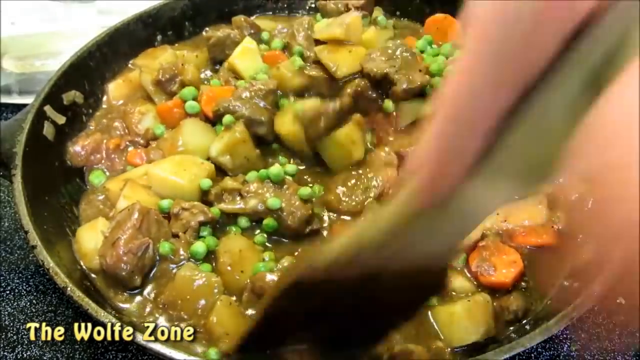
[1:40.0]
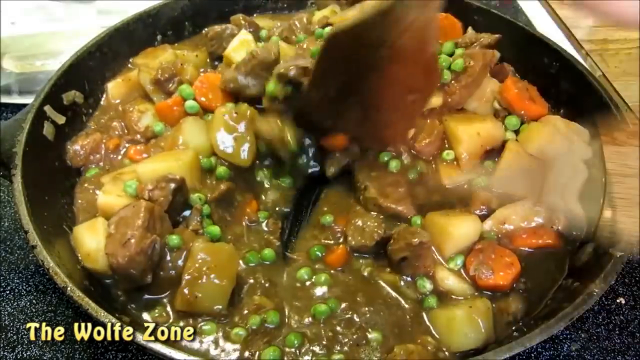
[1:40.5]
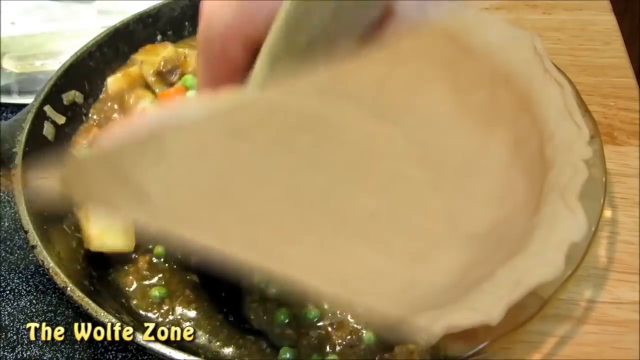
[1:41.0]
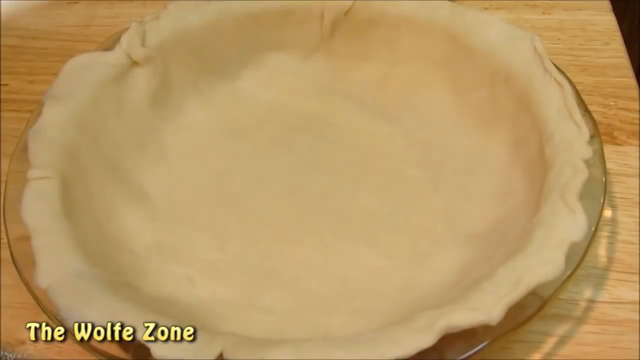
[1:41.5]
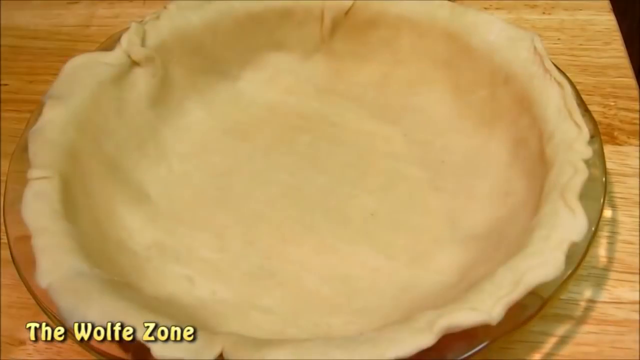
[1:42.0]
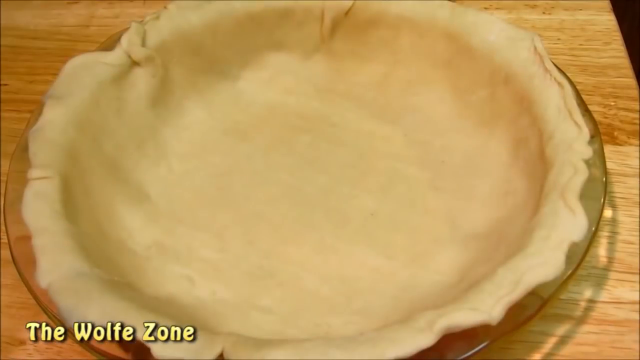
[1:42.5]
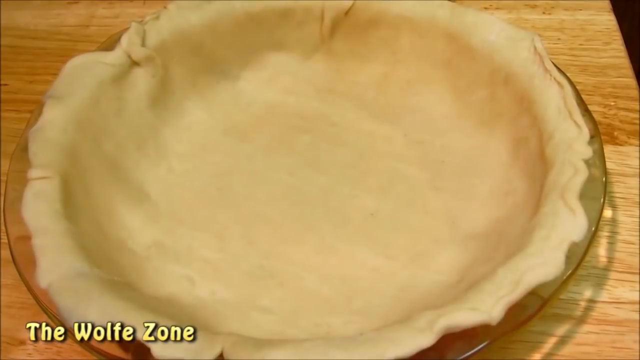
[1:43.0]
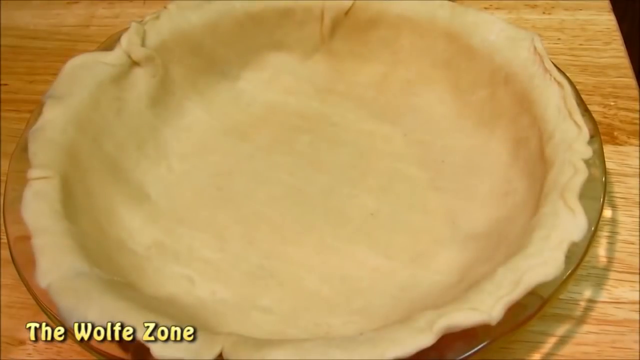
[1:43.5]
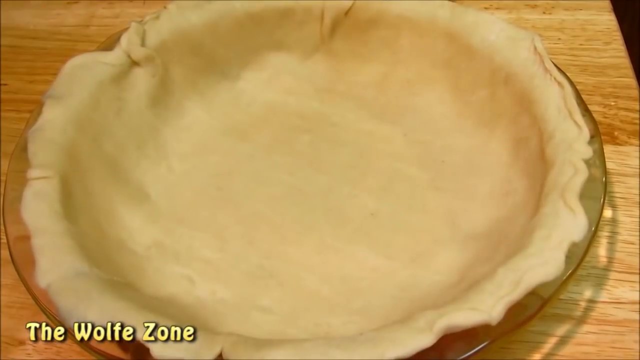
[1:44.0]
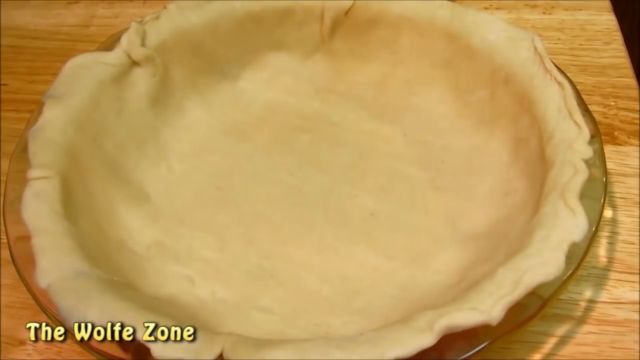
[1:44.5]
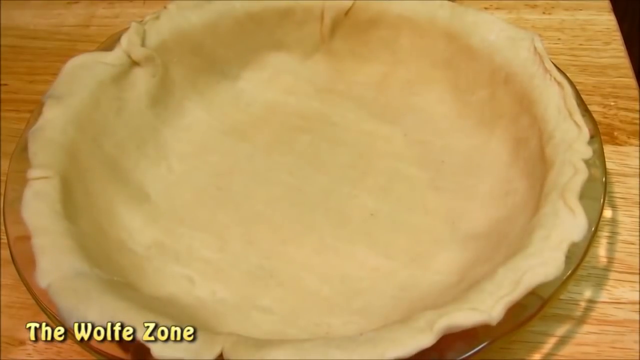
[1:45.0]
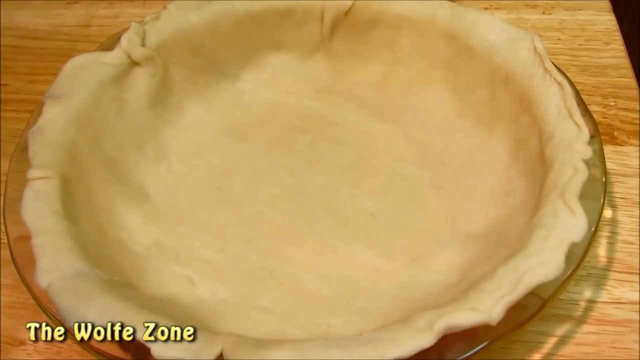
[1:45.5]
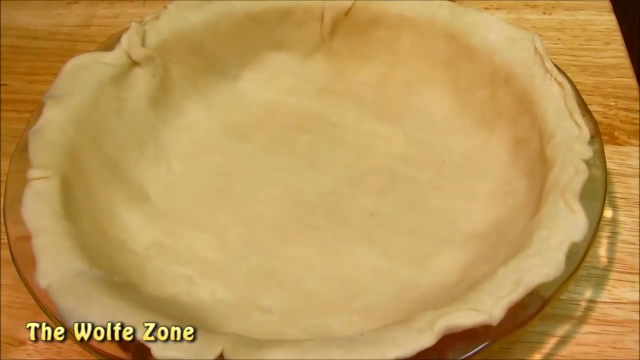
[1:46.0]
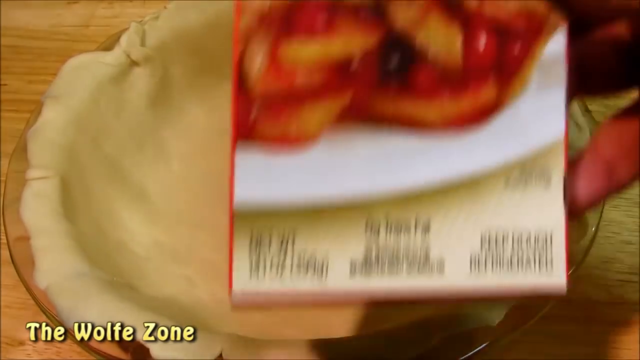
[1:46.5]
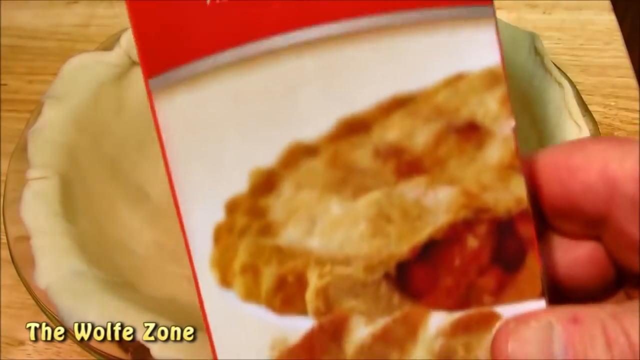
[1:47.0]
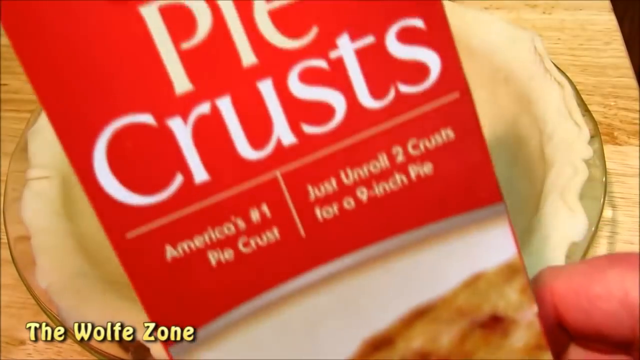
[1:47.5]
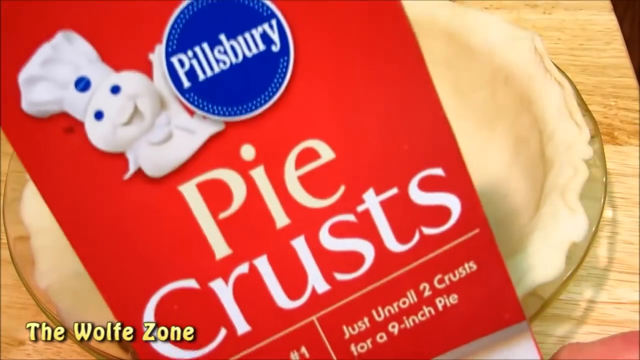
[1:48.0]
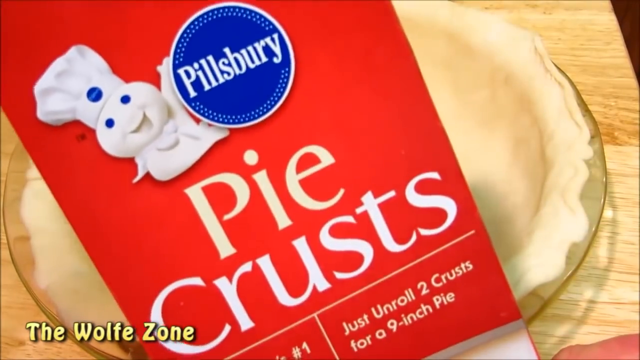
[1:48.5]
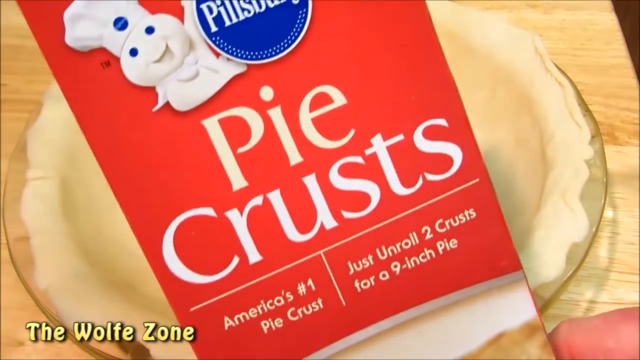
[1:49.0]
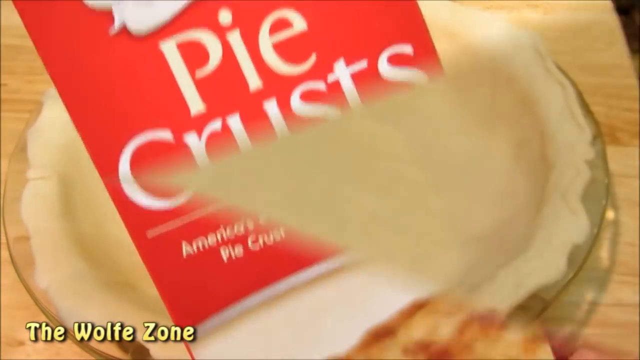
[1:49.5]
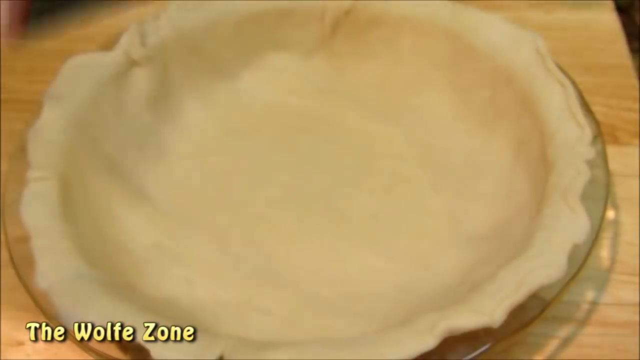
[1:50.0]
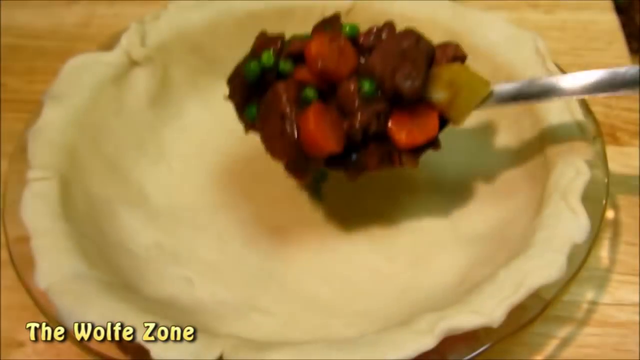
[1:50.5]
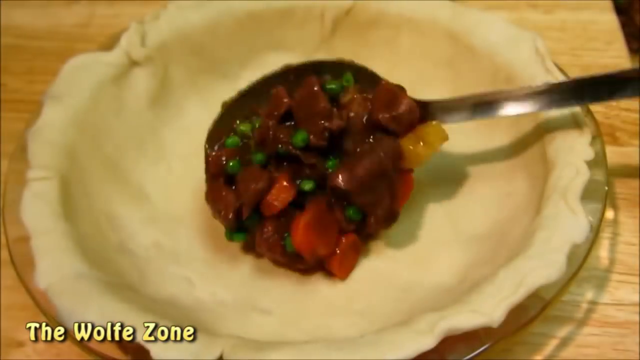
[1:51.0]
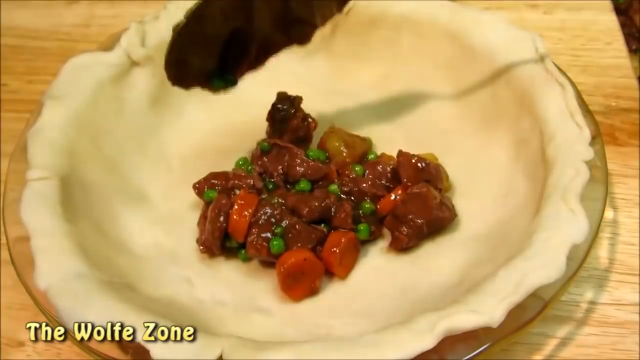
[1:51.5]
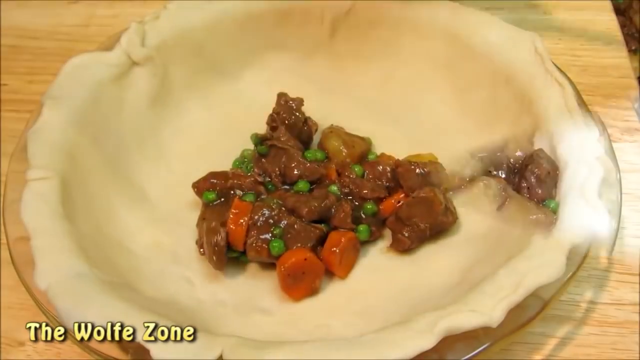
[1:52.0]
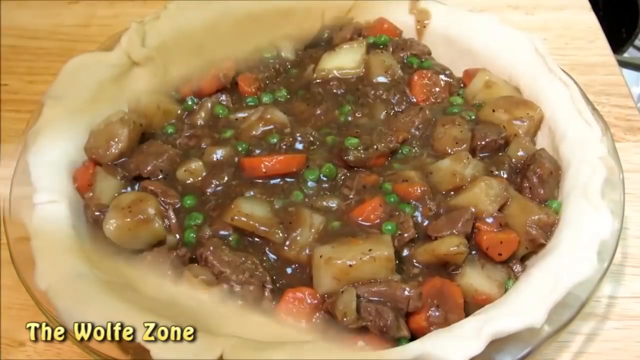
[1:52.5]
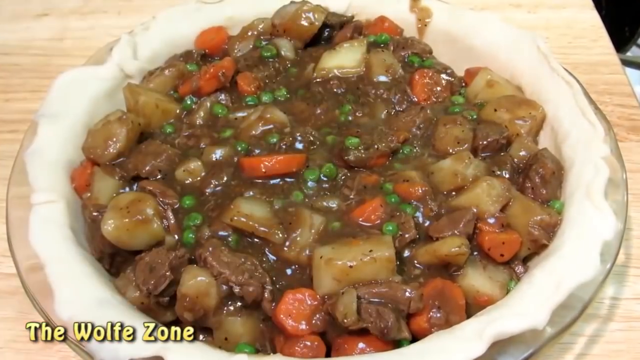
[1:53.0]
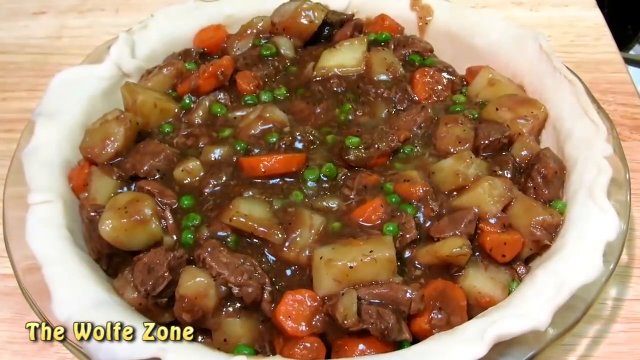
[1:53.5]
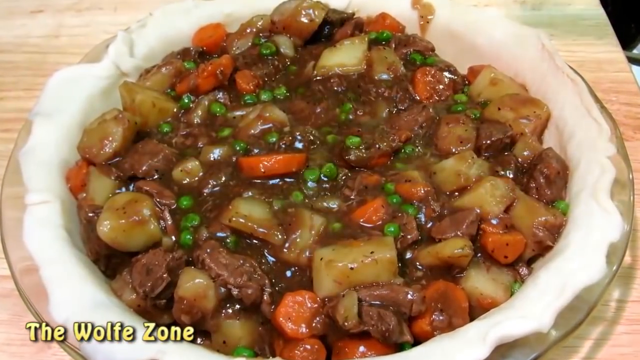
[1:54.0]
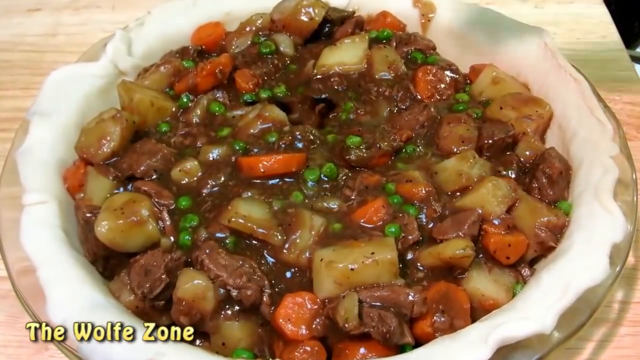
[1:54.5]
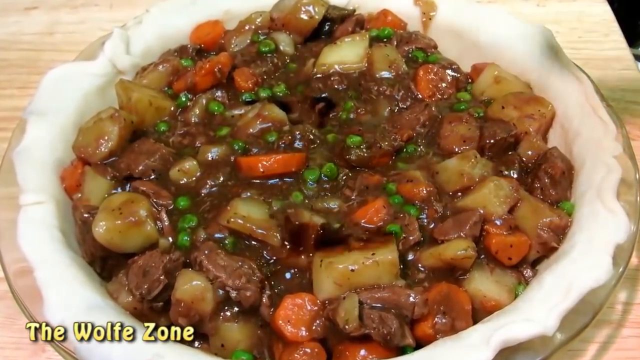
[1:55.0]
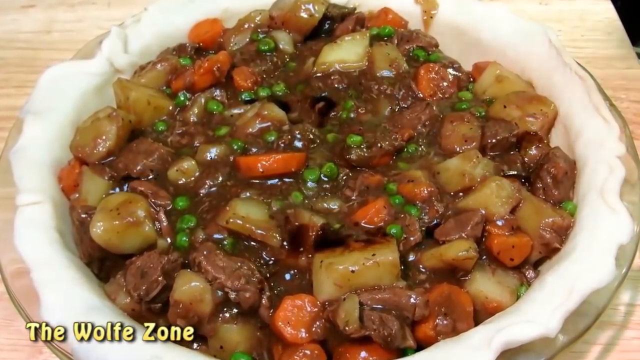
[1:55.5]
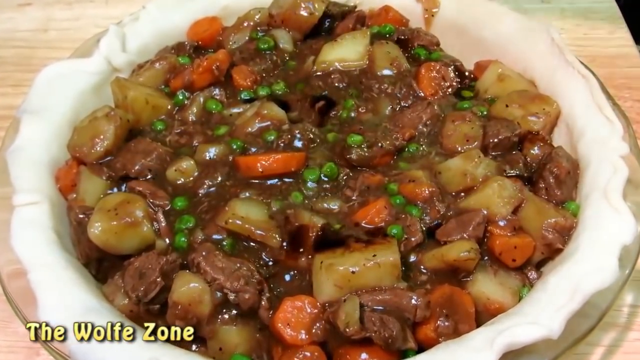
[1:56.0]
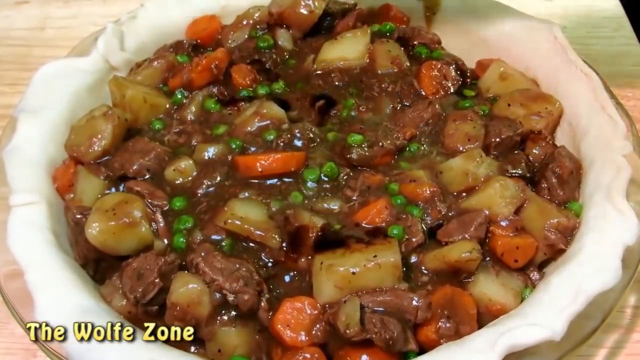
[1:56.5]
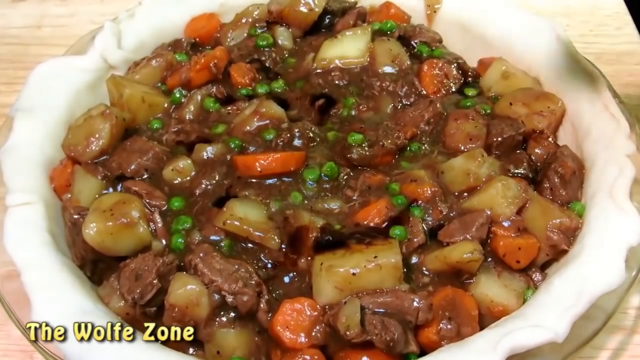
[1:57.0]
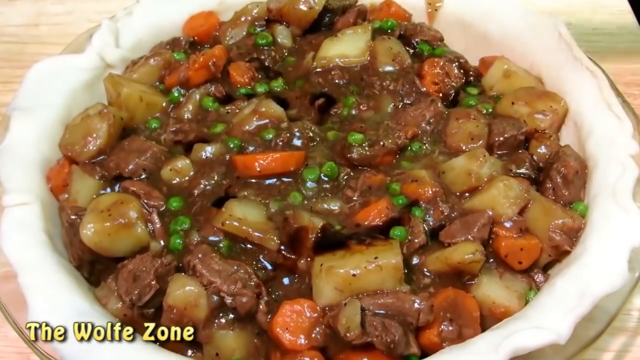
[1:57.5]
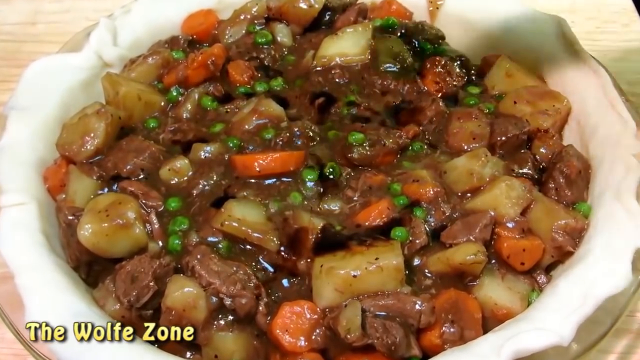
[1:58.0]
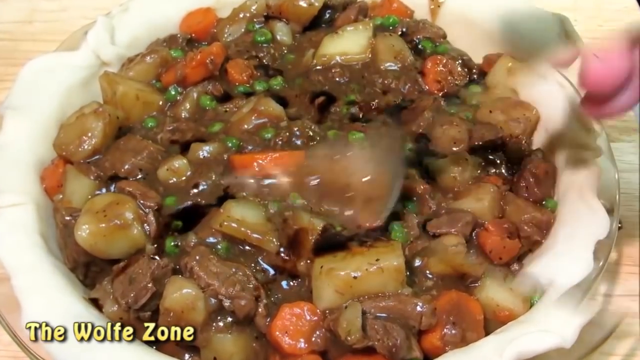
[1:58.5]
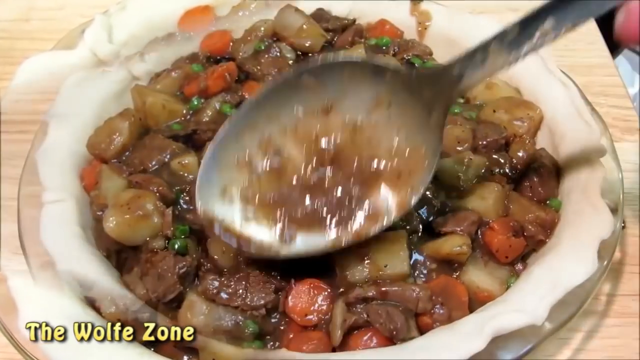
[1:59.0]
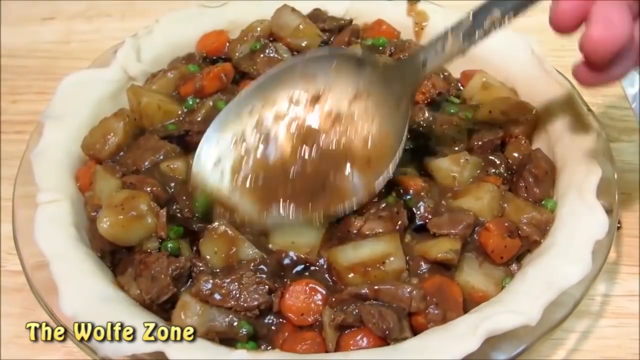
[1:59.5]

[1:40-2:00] The man stirs his pot of meat, carrots, potatoes, caramelized onions and peas; the meat is a cut of steak that looks like sirloin. He shows a pie shell in a pie pan, using Pillsbury pie crusts, and spoons all of the stew into the crust. He drizzles over what looks like either Worcestershire sauce or possibly soy sauce, then spoons it around and smooths it to a flat surface before closing off the top of the pie.